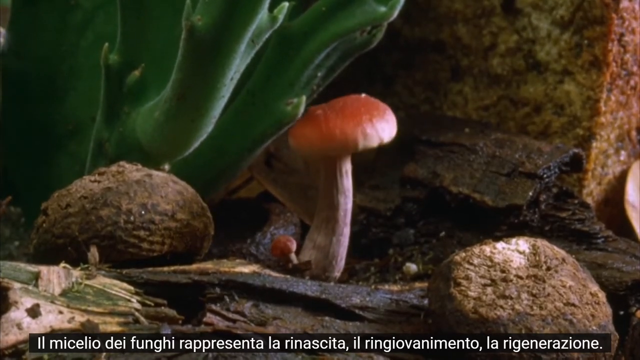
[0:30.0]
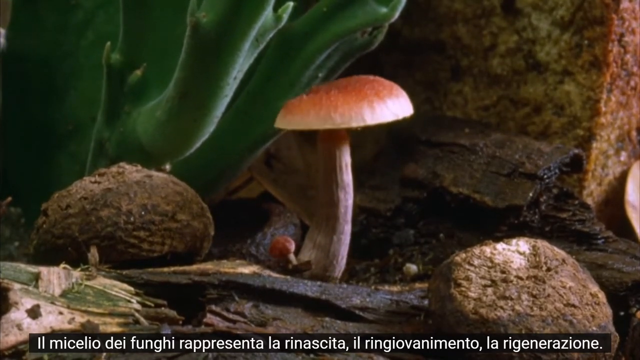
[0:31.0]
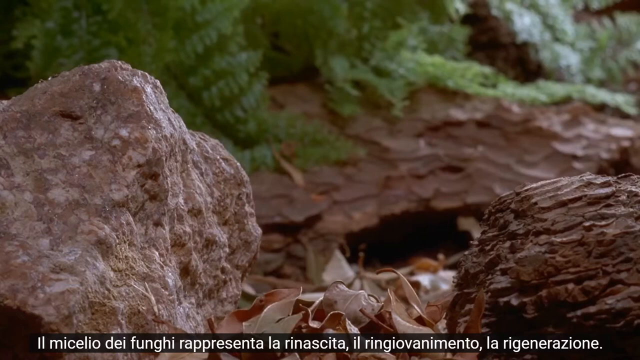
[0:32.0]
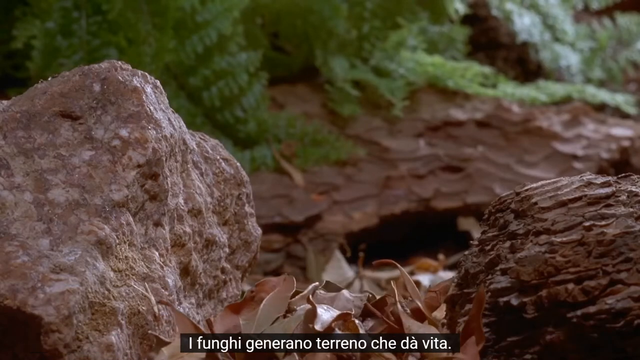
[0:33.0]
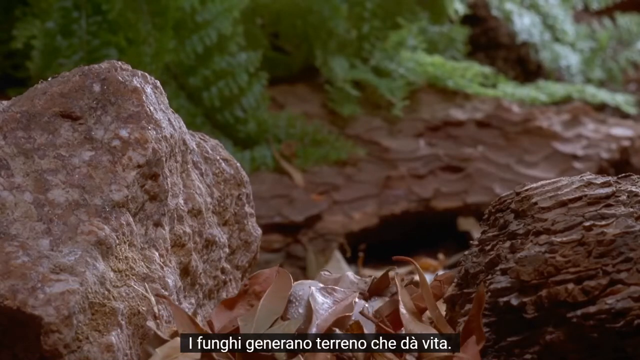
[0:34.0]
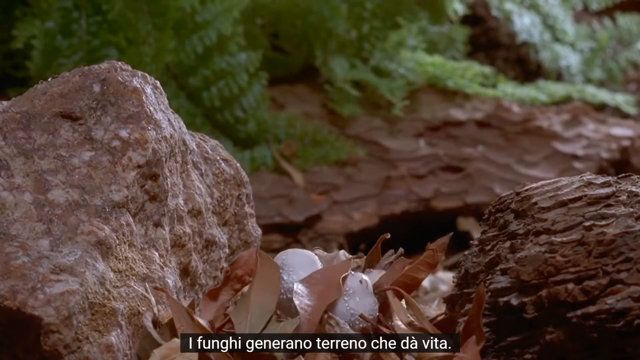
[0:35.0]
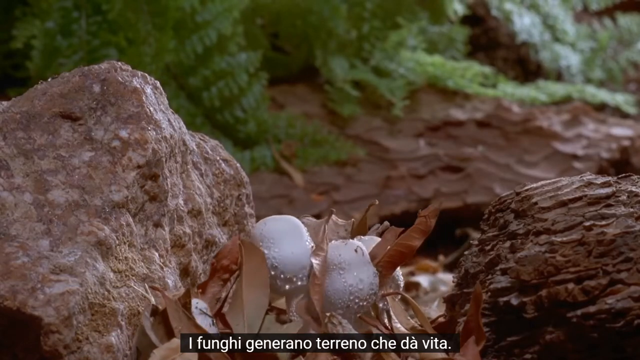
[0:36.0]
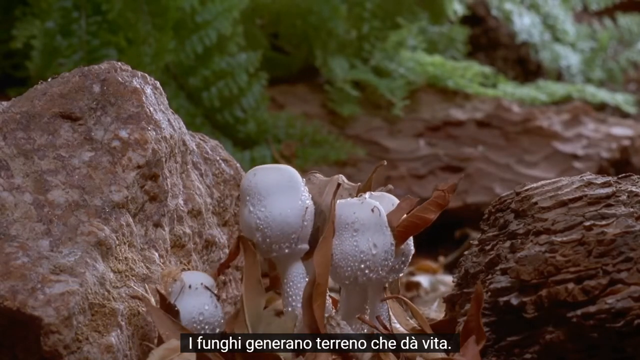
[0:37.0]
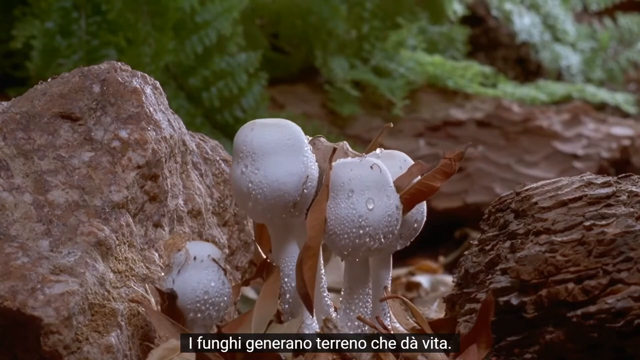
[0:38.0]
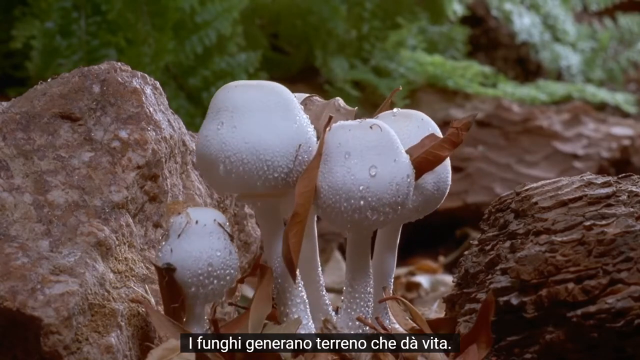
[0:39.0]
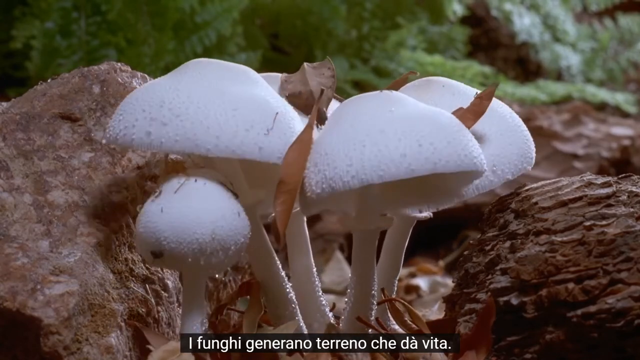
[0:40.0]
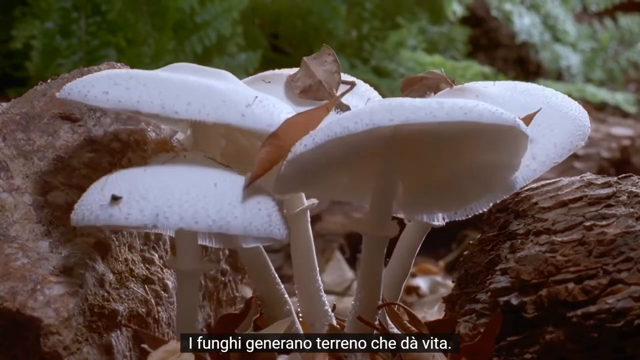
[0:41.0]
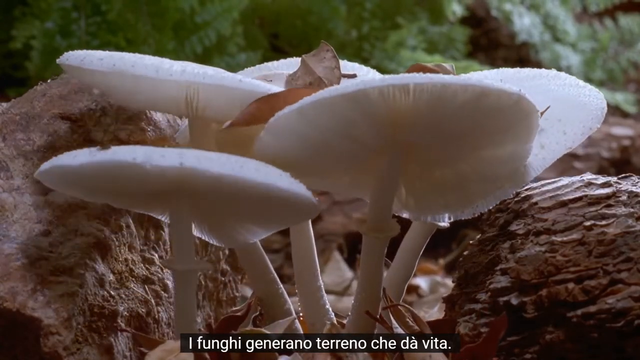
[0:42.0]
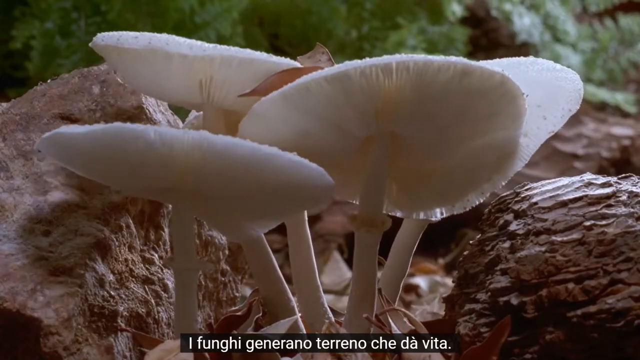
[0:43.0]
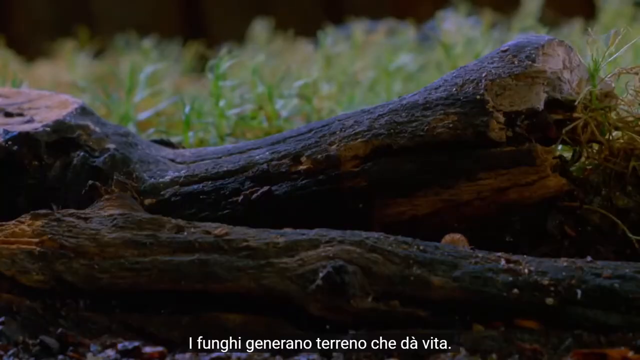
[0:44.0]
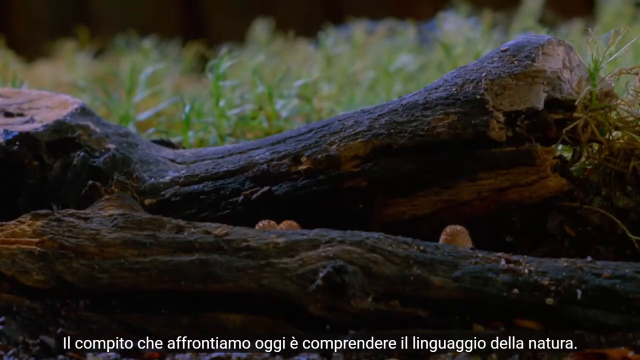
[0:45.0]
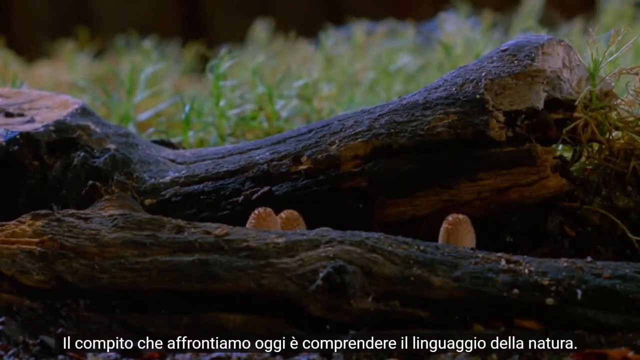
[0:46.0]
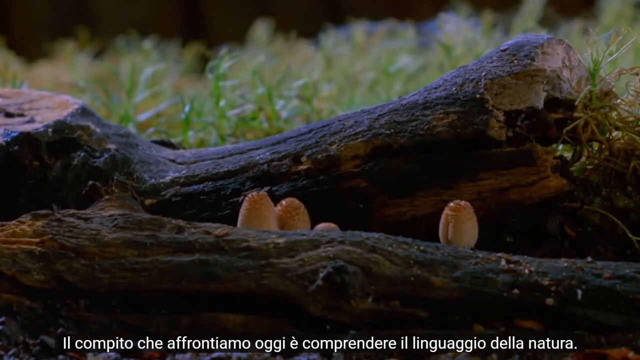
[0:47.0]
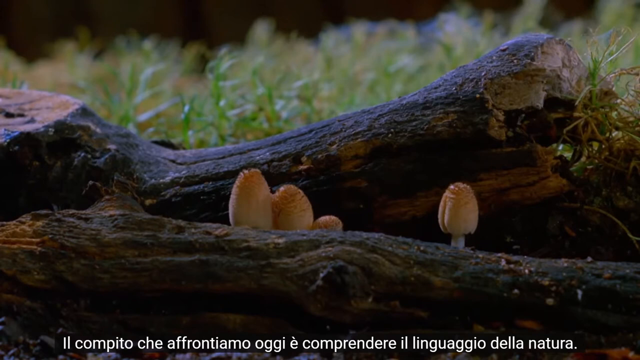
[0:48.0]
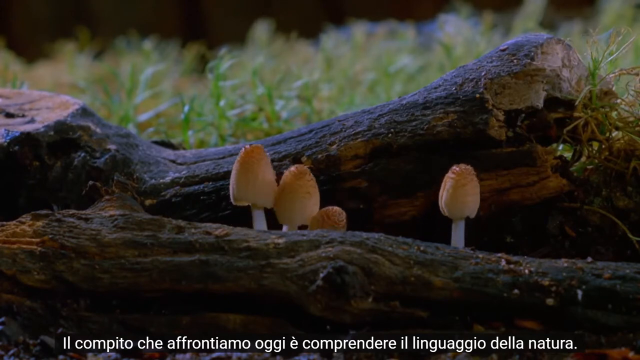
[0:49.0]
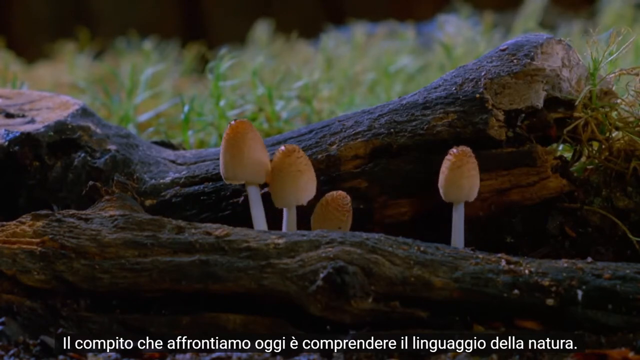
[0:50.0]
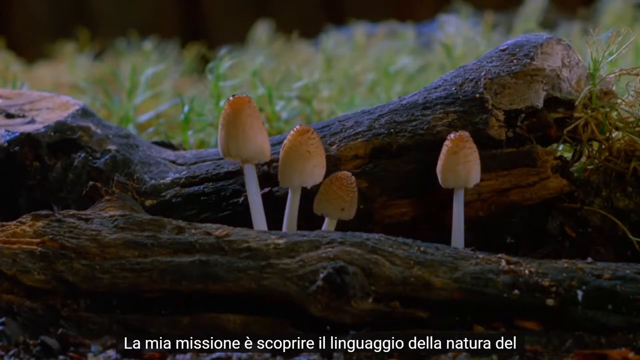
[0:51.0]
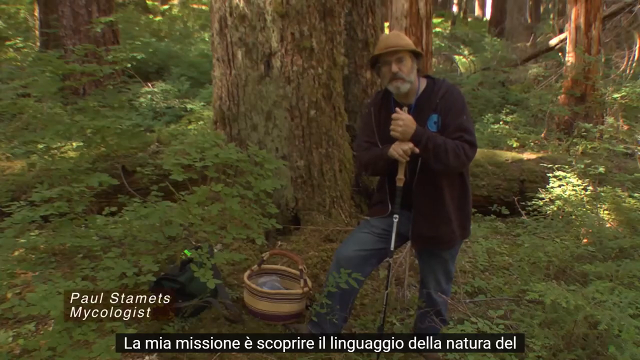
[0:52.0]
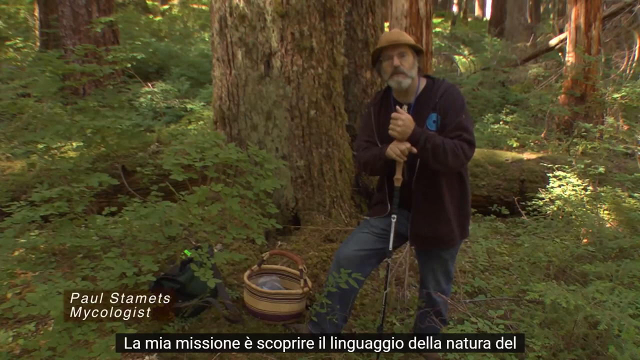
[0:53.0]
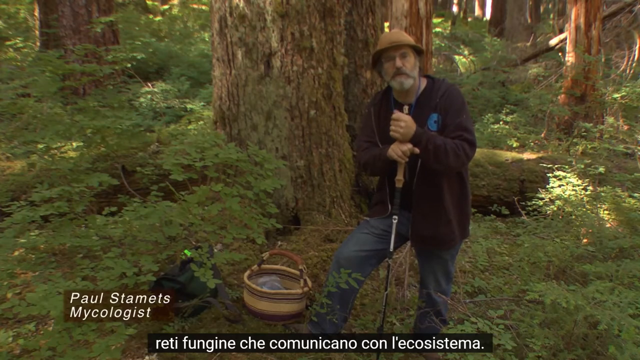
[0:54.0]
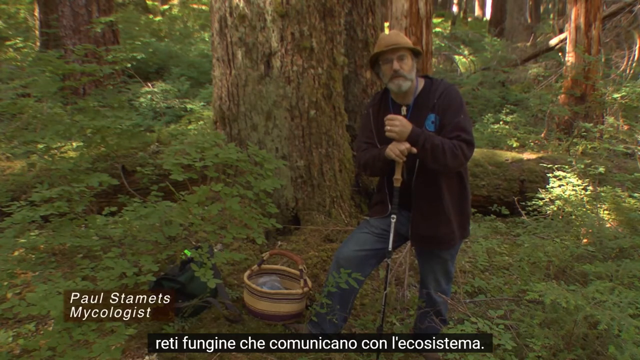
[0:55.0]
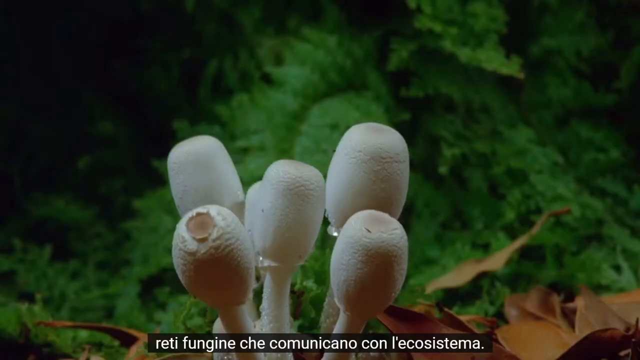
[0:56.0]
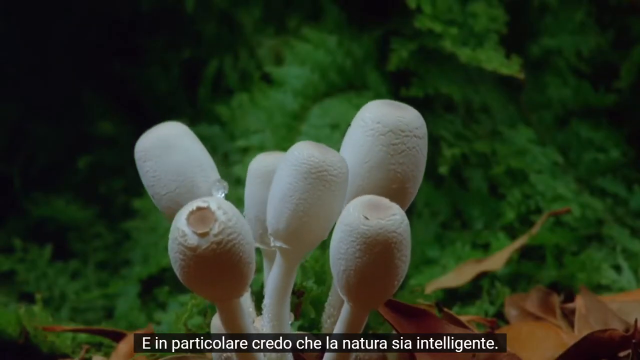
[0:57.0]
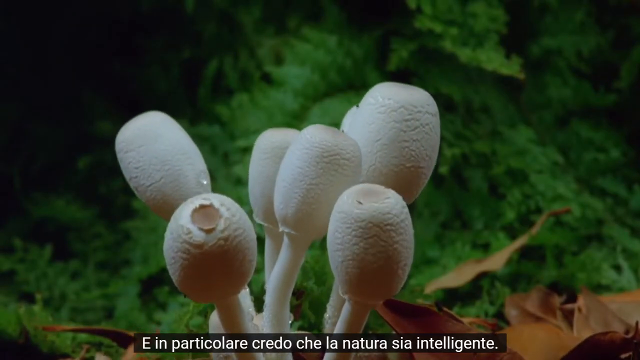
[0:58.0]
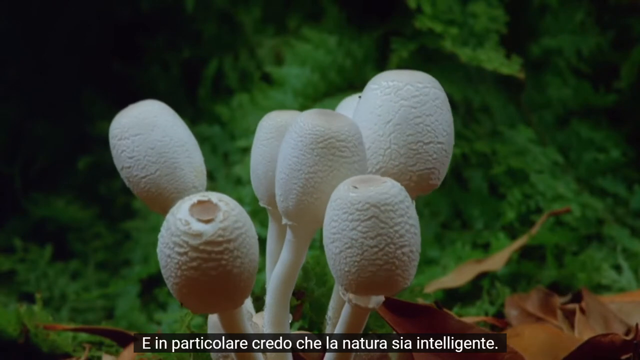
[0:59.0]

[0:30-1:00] The scene continues with a piece of wood and a mushroom beginning to grow in the center of the screen. Two round rocks, slightly bigger than the mushroom, are on either side, there is a rock or a piece of rock resembling a wall at the top right, and green leaves are to the left behind the mushroom. The mushroom has a narrow stalk with a red top that expands into a circular dome. The scene then cuts to another woodland scene with a large rock on the left-hand side and a smaller piece of wood on the right. In the background are more rocks and foliage, and something is visible between the rock and the piece of wood. In the foreground, leaves at the bottom center of the screen move, and slowly five white mushrooms appear, their stalks initially fairly narrow.